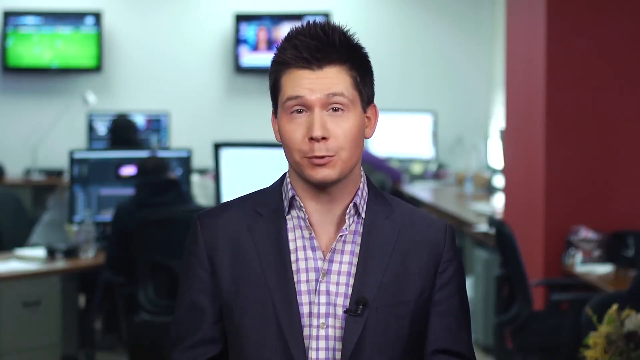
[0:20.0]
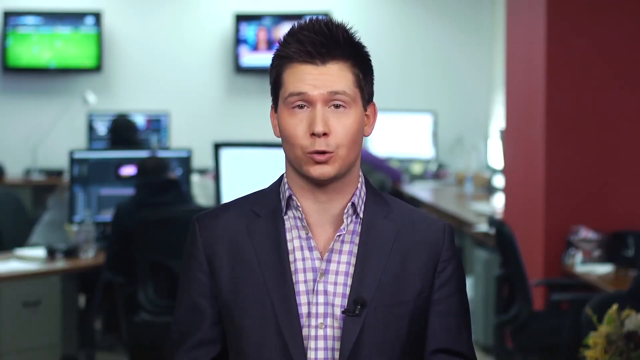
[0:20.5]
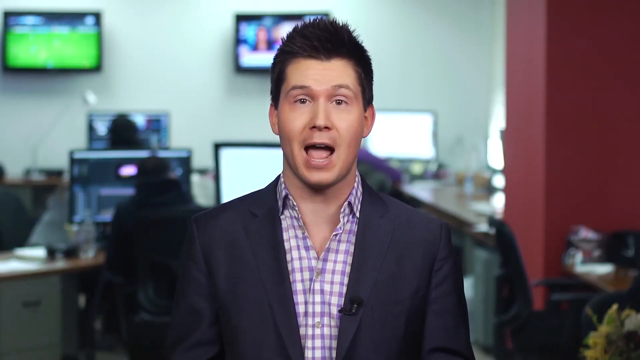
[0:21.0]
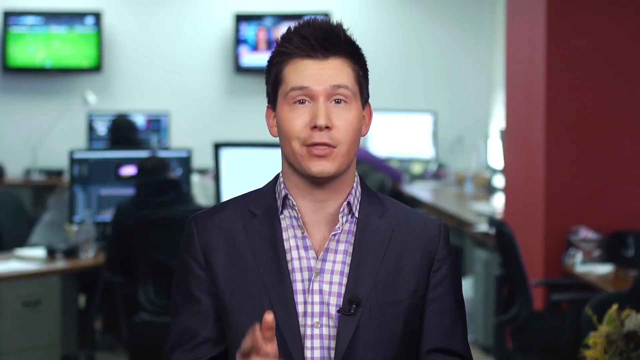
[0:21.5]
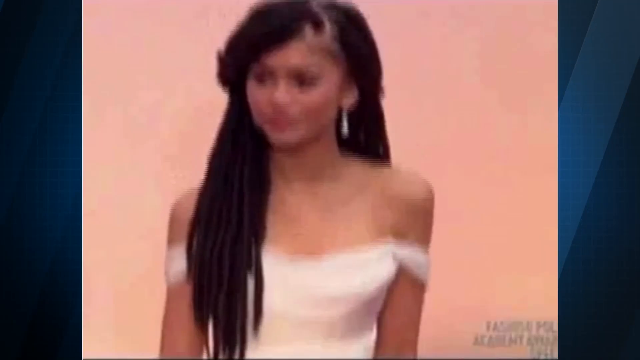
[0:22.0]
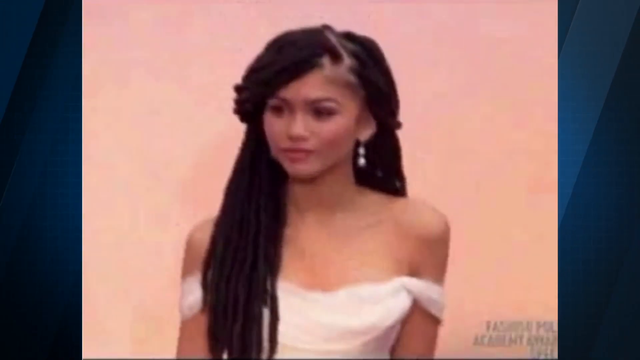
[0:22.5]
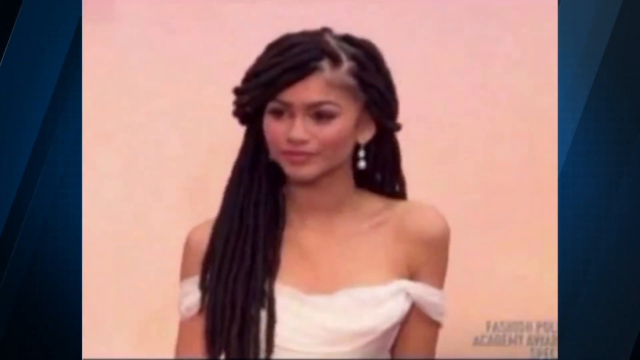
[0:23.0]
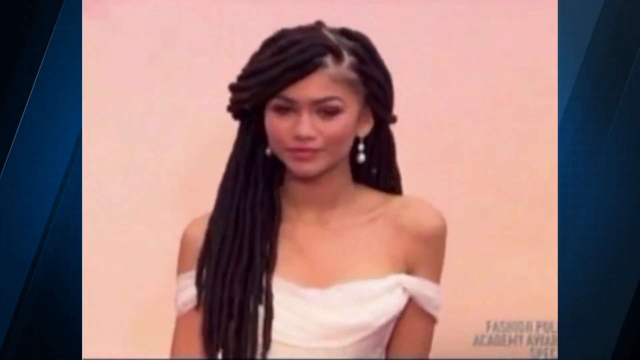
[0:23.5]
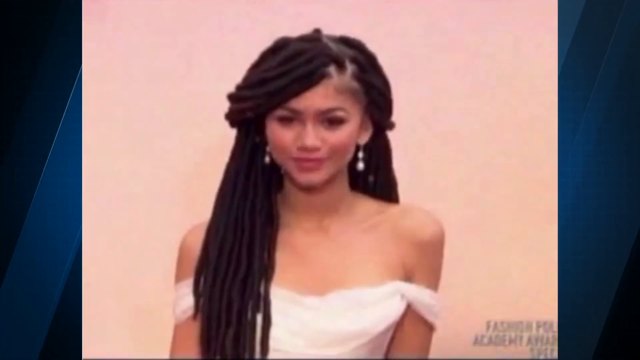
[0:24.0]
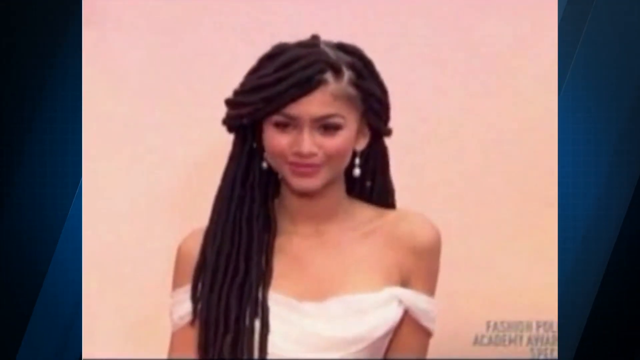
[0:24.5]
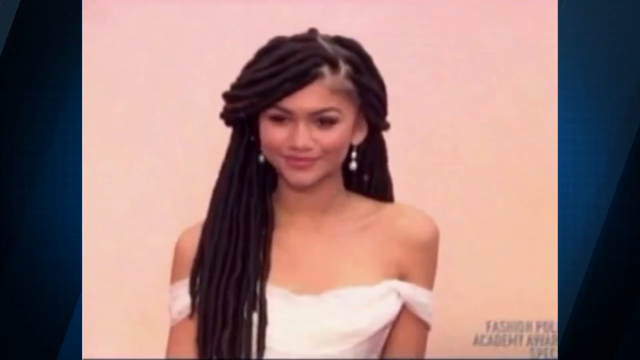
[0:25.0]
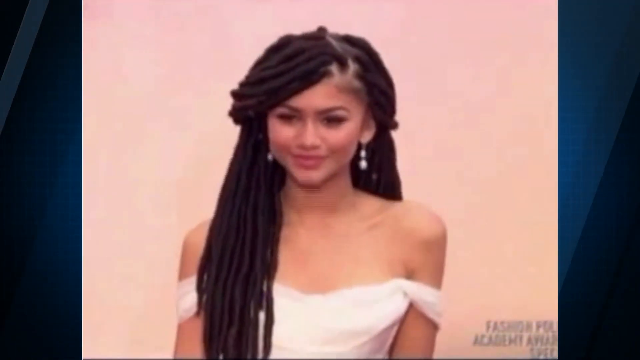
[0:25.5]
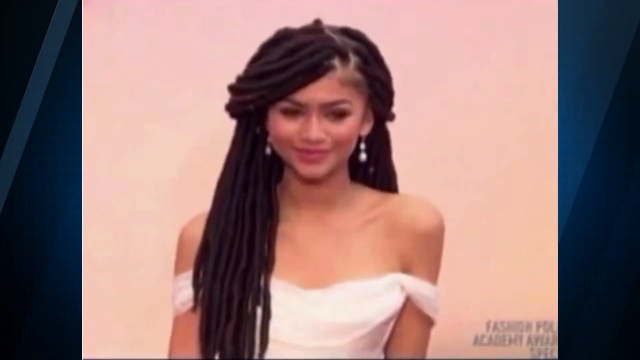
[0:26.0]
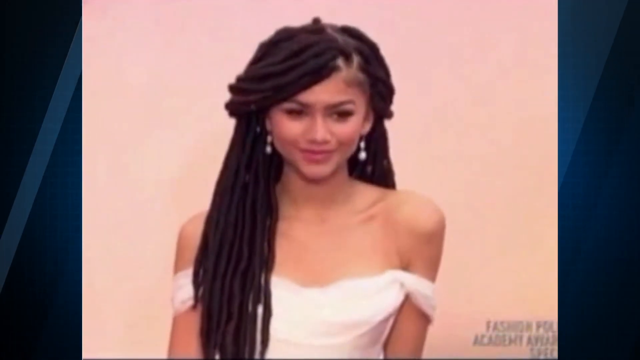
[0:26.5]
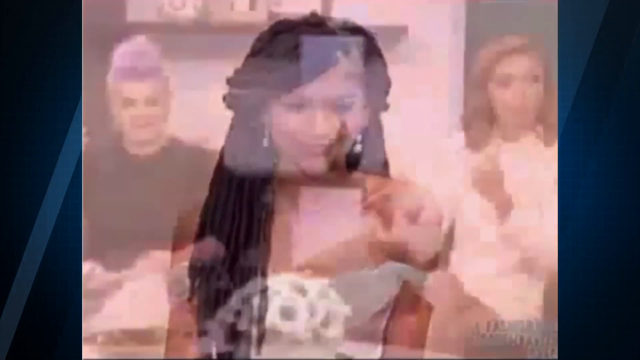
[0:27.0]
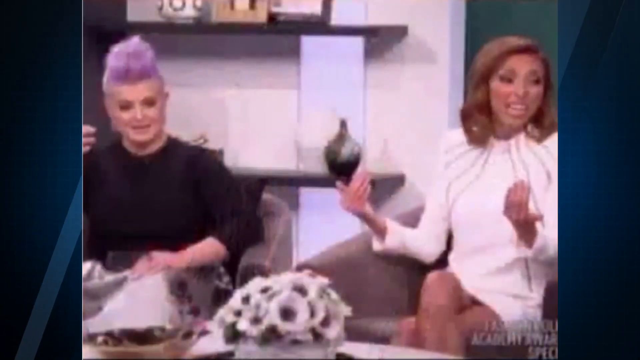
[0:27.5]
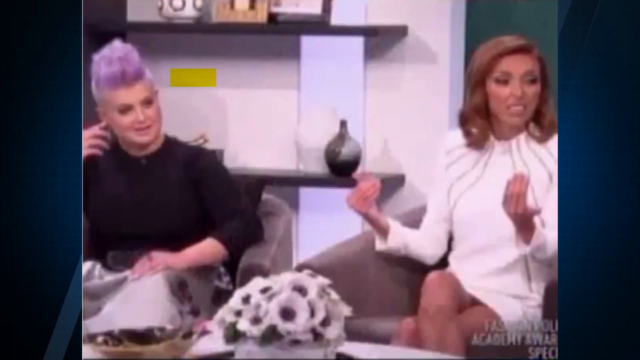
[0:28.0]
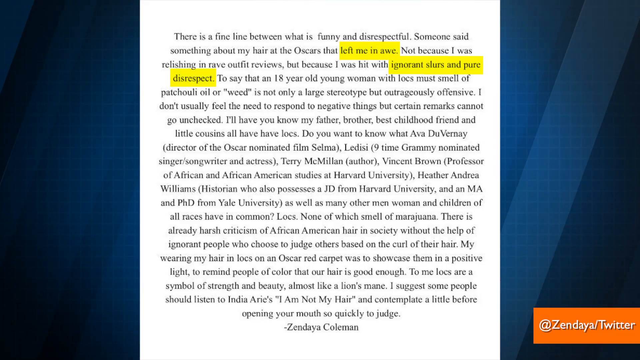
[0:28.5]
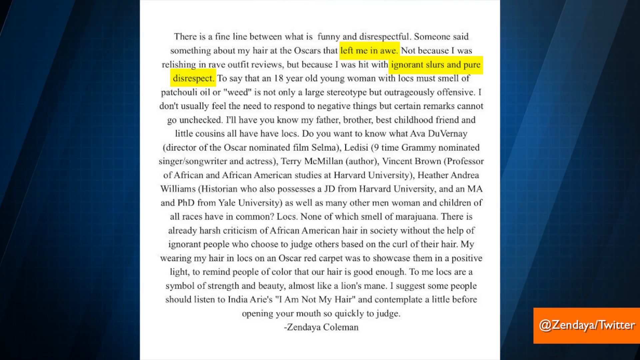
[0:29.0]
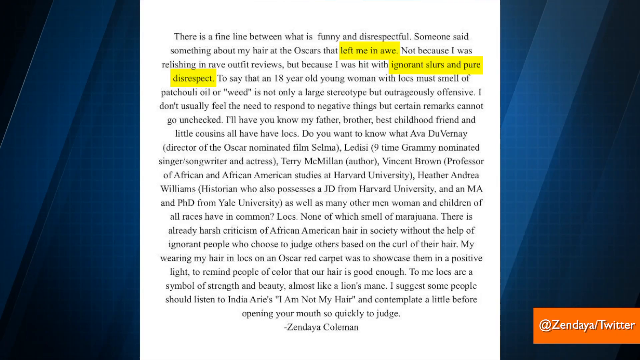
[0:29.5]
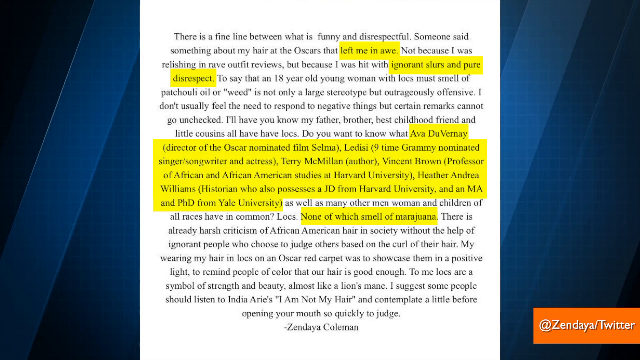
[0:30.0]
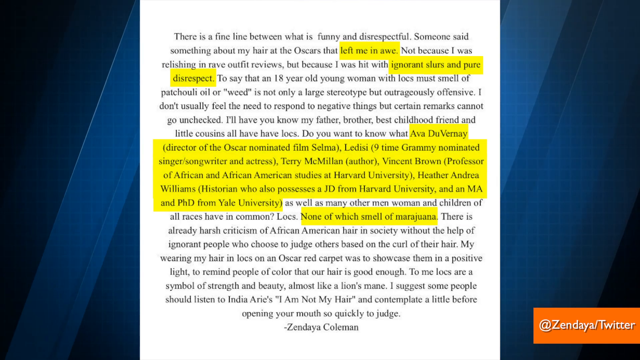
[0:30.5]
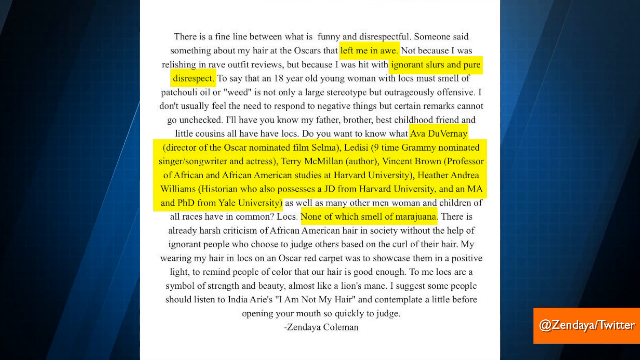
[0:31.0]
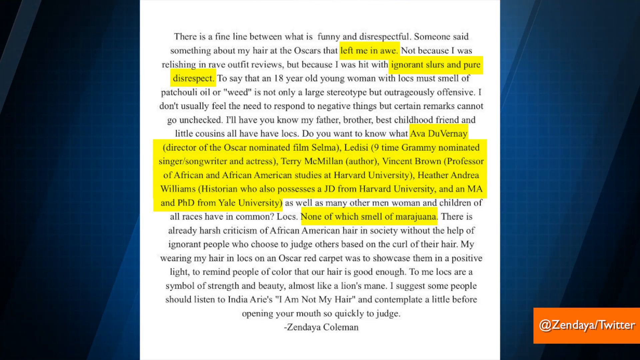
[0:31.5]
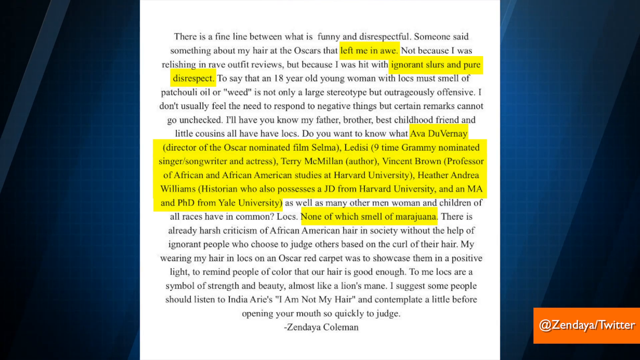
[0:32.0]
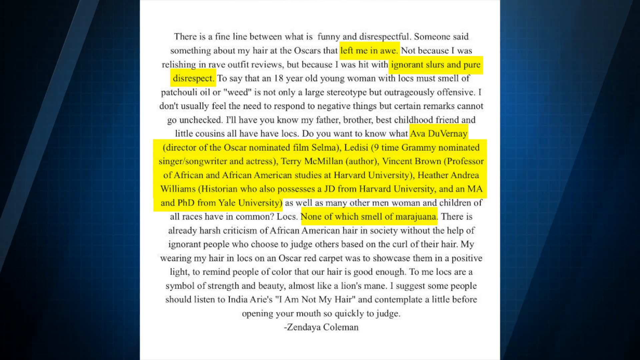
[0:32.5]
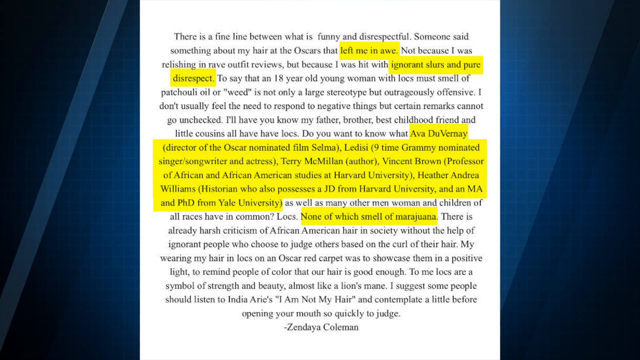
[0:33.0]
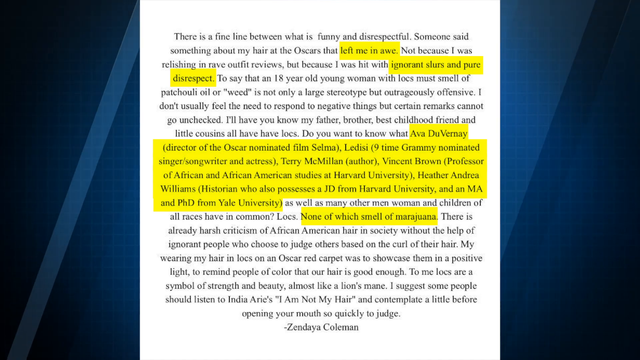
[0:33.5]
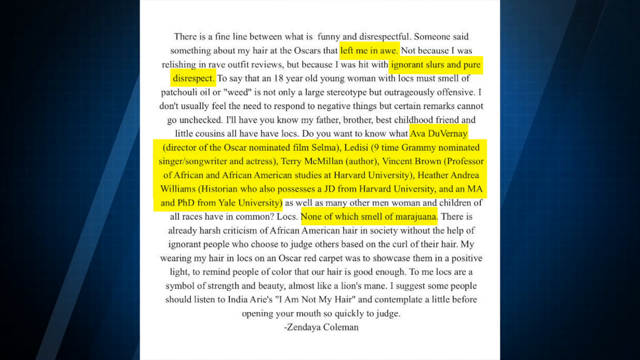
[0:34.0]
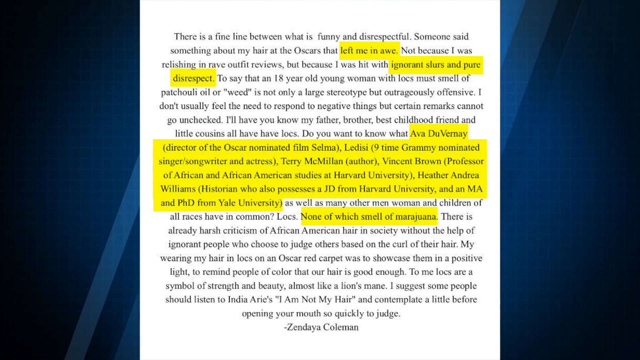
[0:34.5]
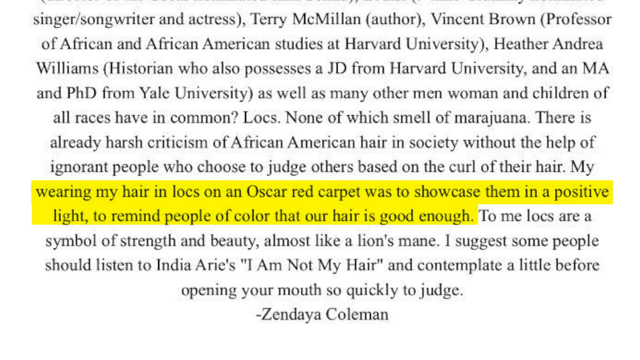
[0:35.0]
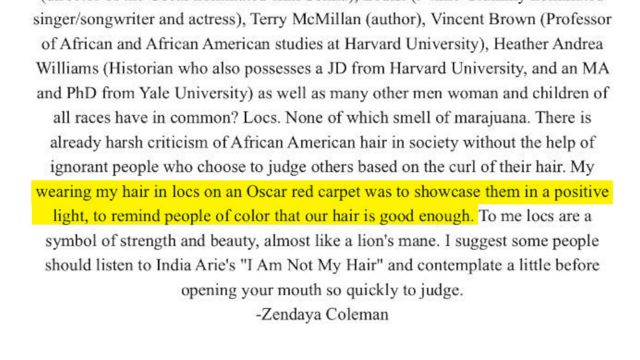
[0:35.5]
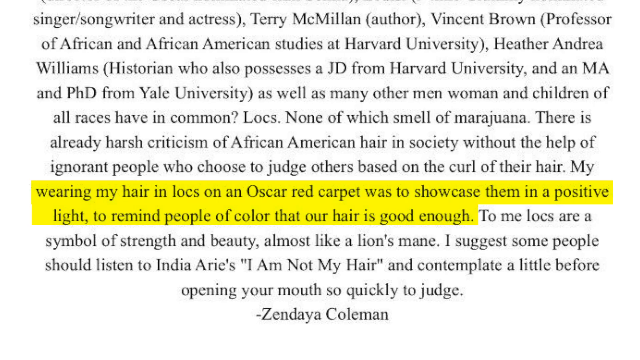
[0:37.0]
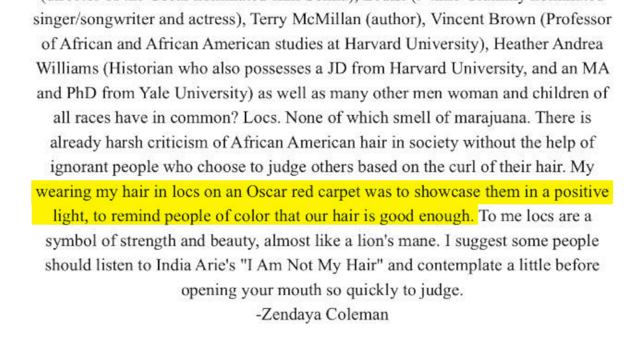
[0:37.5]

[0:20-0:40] The reporter is shown alongside a photo of a lady with long black hair wearing a white dress. A man and a lady are then shown, all seated, with the lady explaining something to the man. A message then pops up from Zita Komen. It is a long message about the Oscars and locks that includes the lines "certain remarks cannot go unchecked" and "to remind people of color that our hair is good enough. To me, locks are a symbol of strength and beauty".